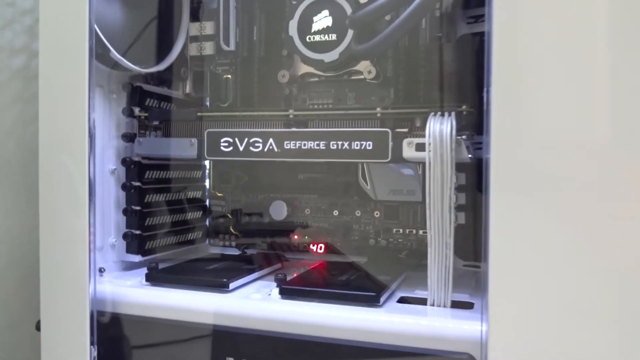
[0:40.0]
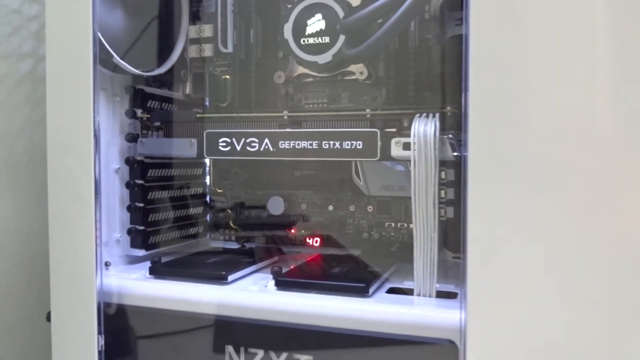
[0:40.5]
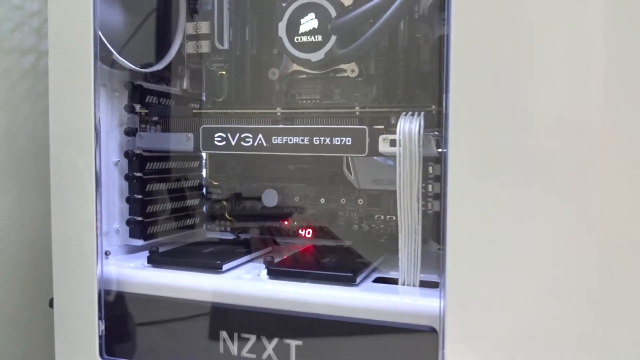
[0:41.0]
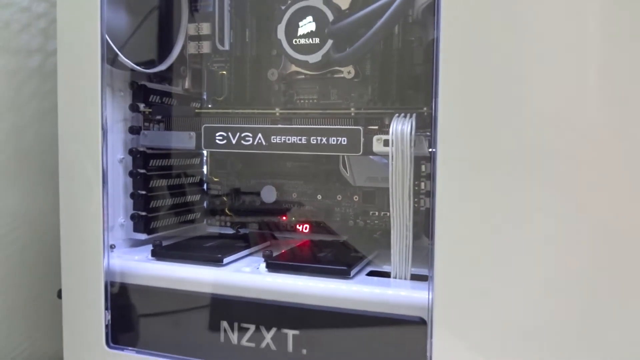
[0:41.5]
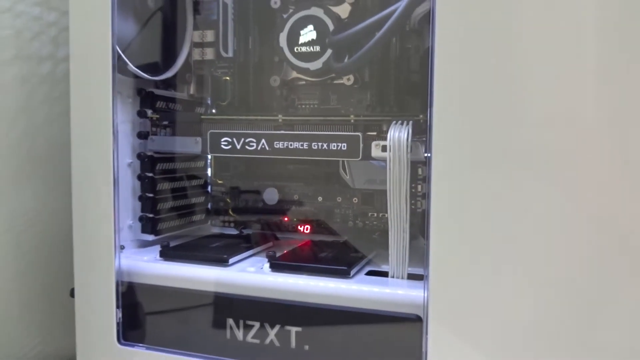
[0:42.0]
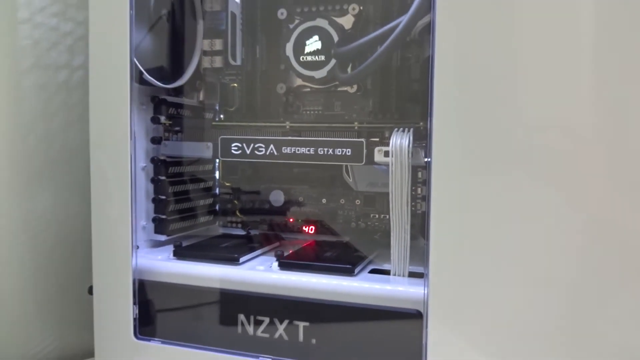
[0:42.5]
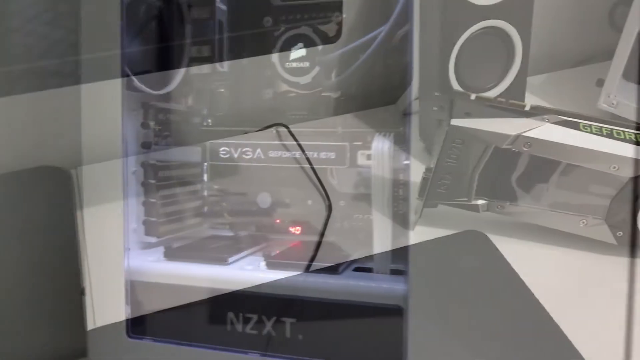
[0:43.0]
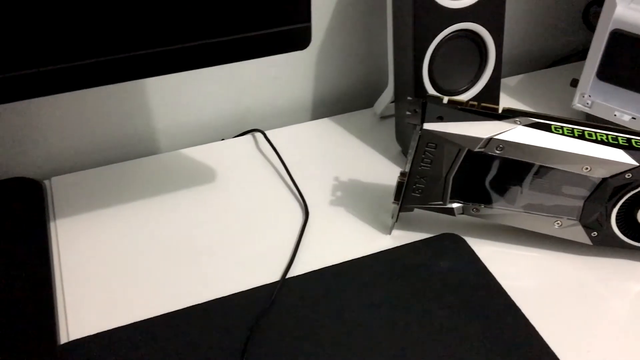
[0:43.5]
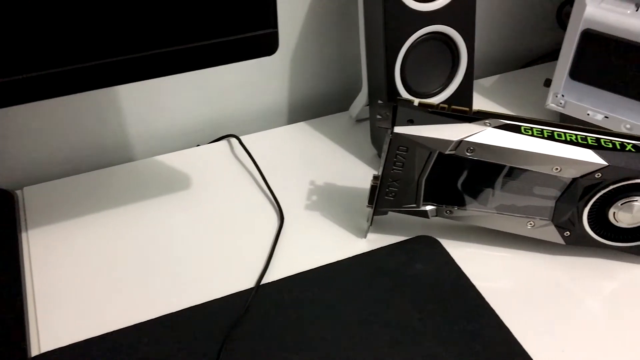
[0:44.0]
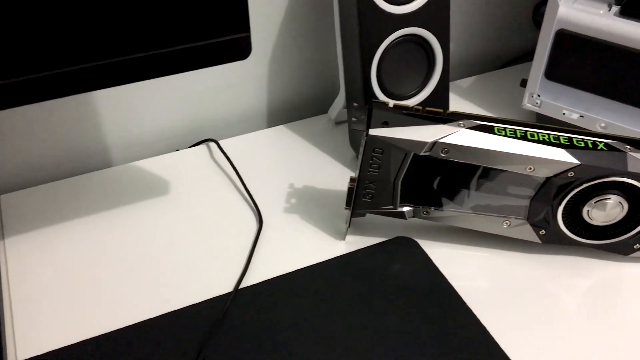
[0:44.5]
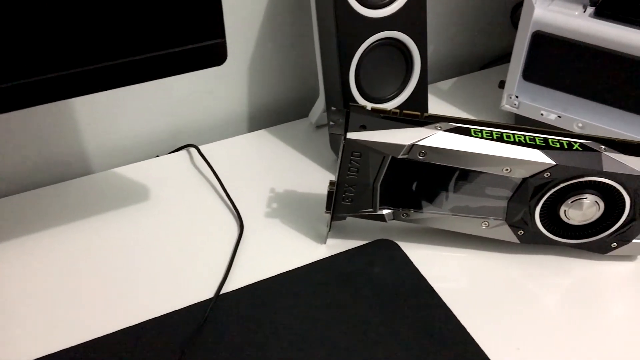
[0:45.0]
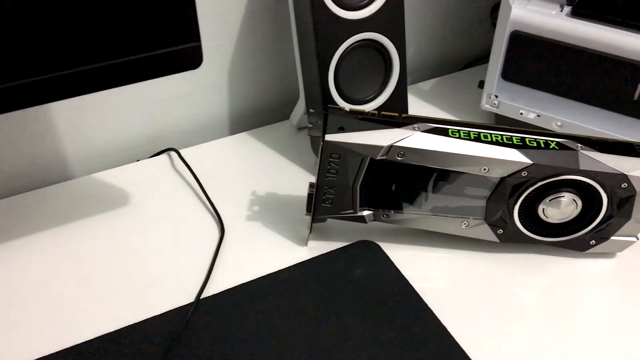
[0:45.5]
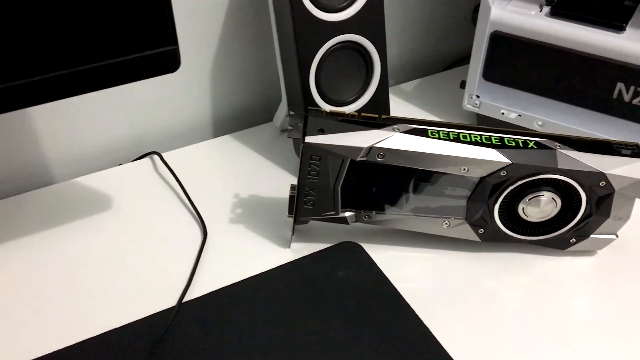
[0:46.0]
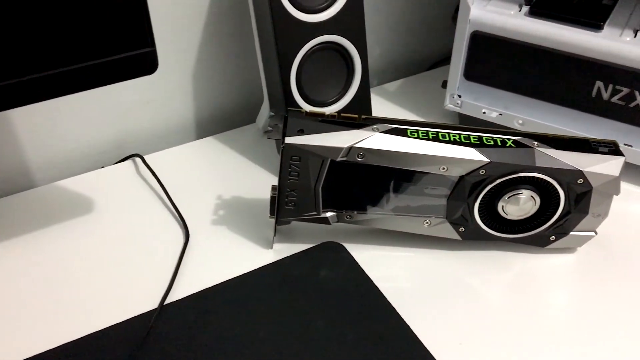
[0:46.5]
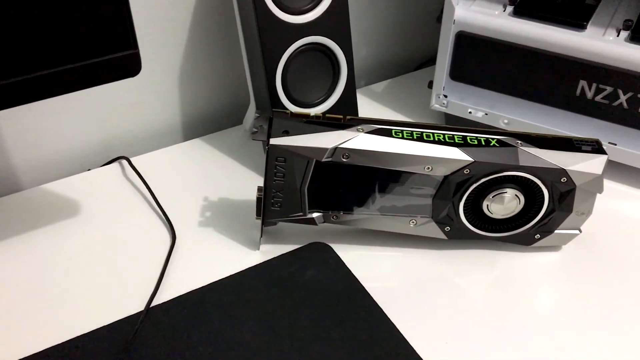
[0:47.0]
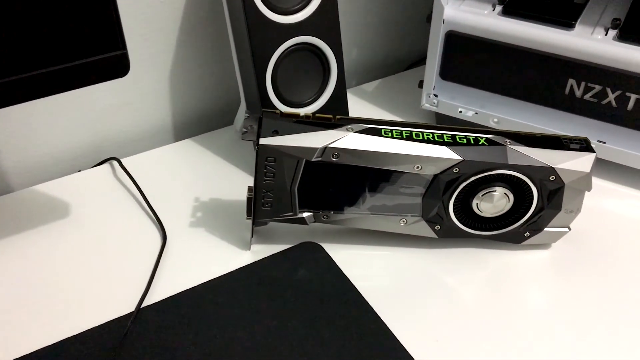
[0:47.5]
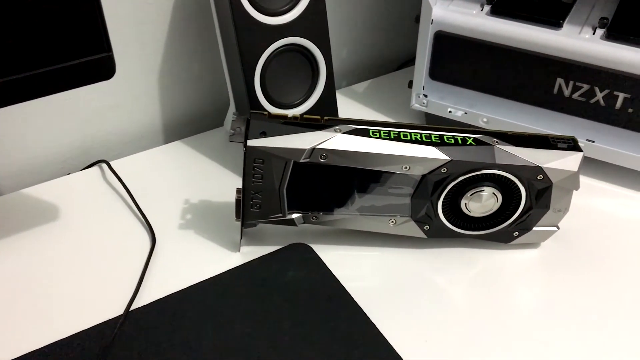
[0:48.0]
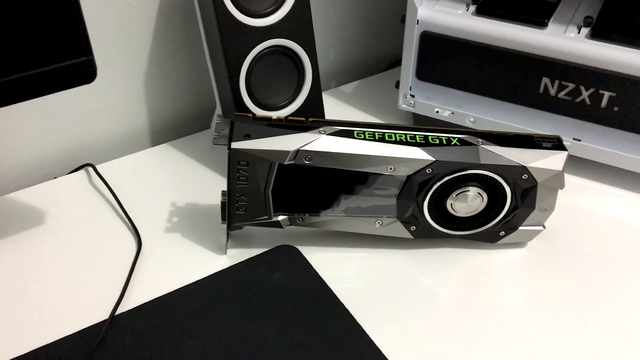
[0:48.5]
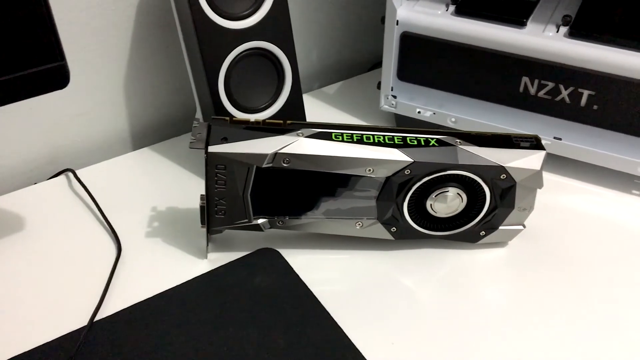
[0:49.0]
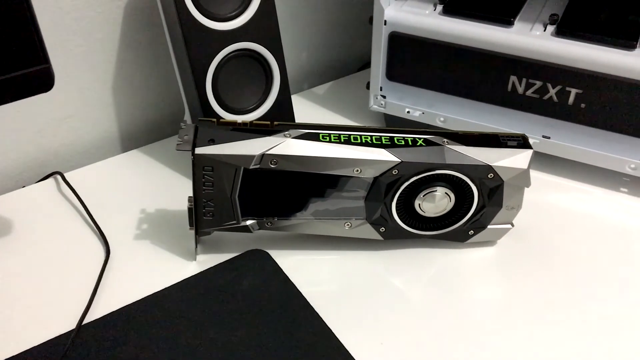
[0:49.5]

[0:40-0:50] The inside of a custom-built desktop computer is shown, with the Corsair logo in the very center on the back wall of the tower and the EVGA GeForce GTX 1070 video card mounted in the lower center part. The video then transitions to the GeForce GTX taken out of a computer and lying on a desktop for display. Computer speakers are all around the card, a computer monitor is to the left, a keyboard is in the lower part of the frame, and what looks like the desktop tower, an NZXT case, is on the right side.